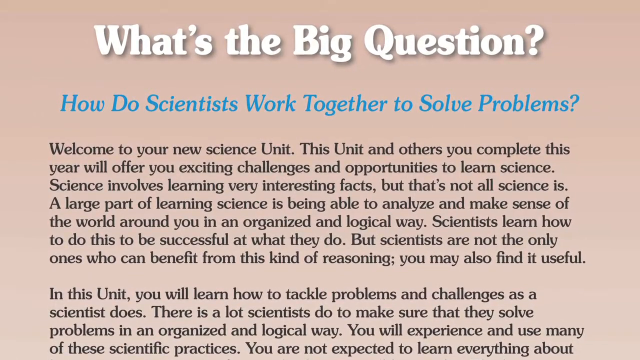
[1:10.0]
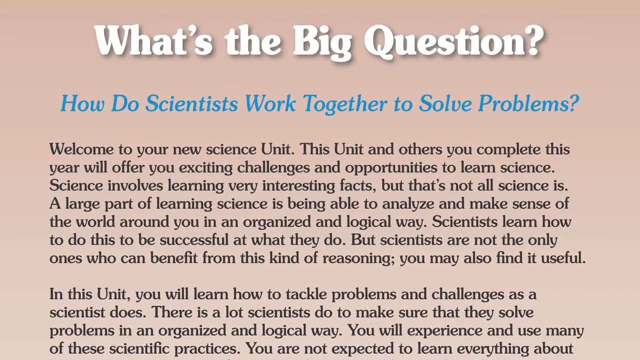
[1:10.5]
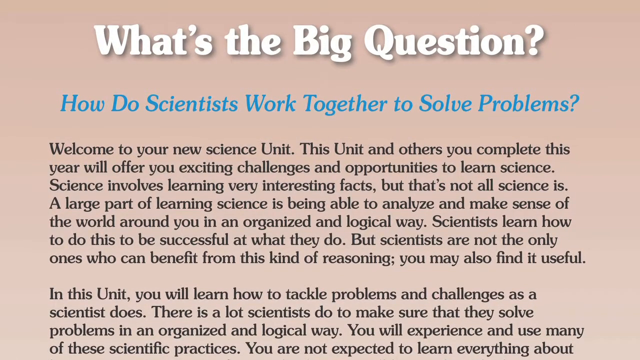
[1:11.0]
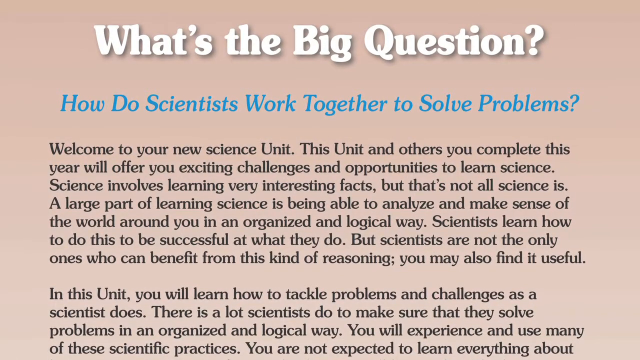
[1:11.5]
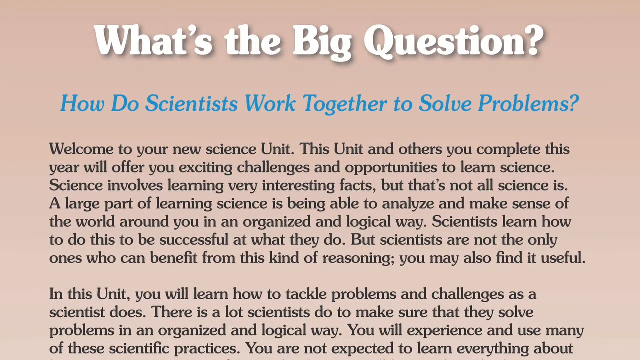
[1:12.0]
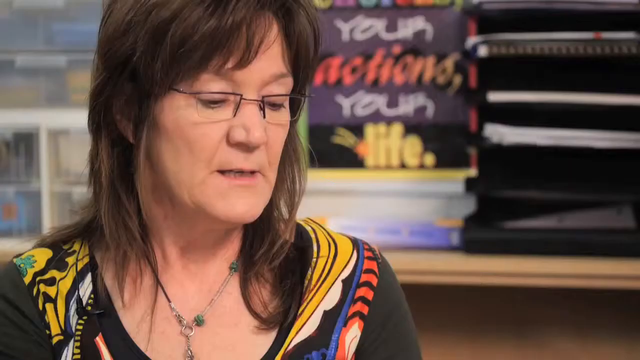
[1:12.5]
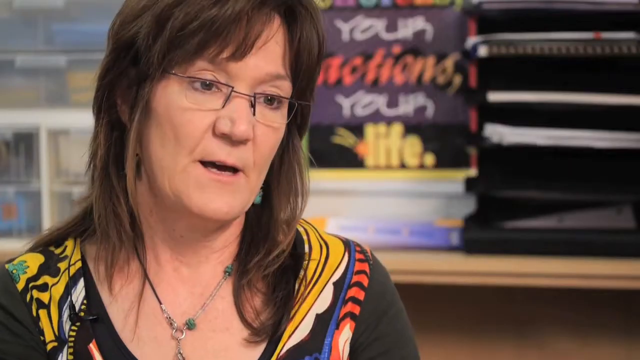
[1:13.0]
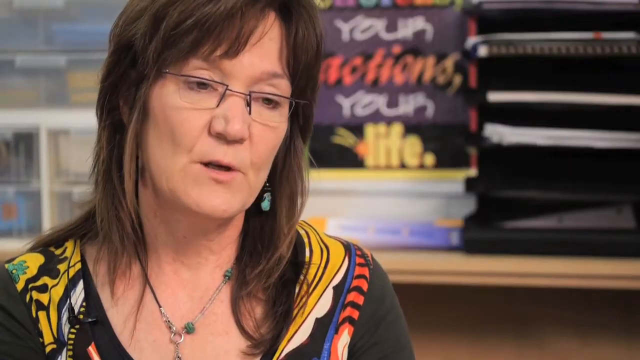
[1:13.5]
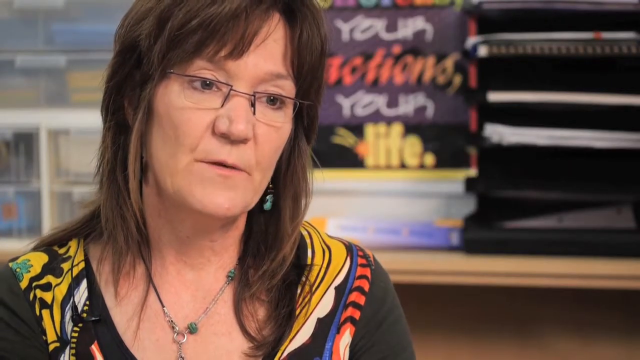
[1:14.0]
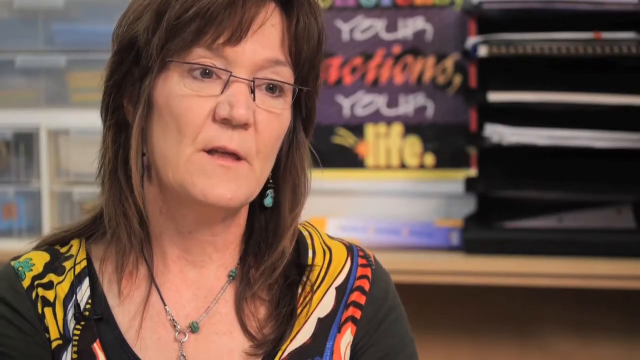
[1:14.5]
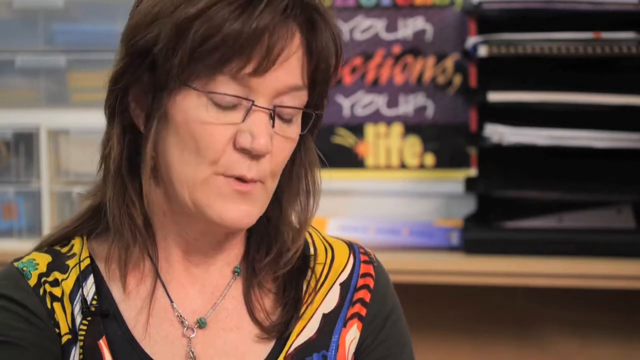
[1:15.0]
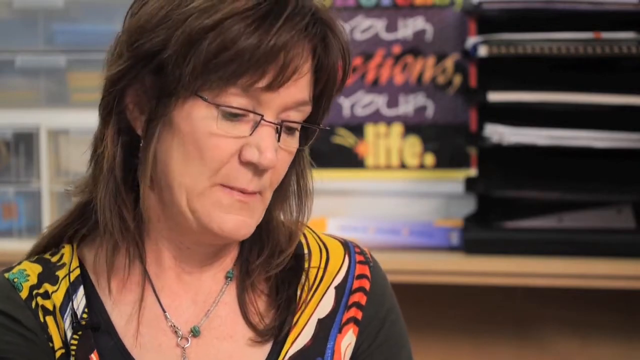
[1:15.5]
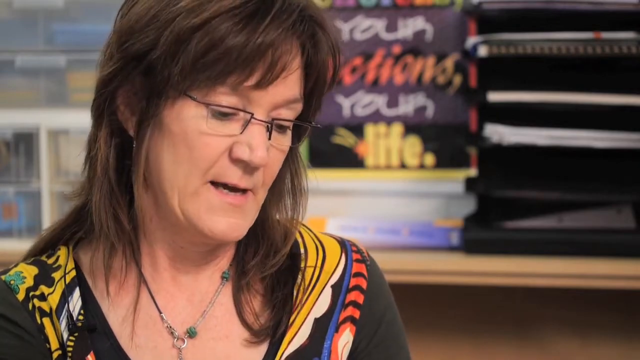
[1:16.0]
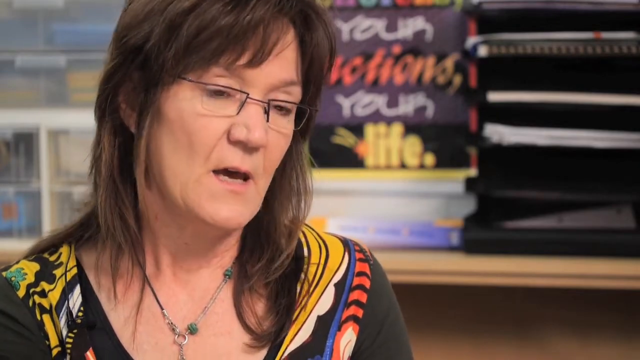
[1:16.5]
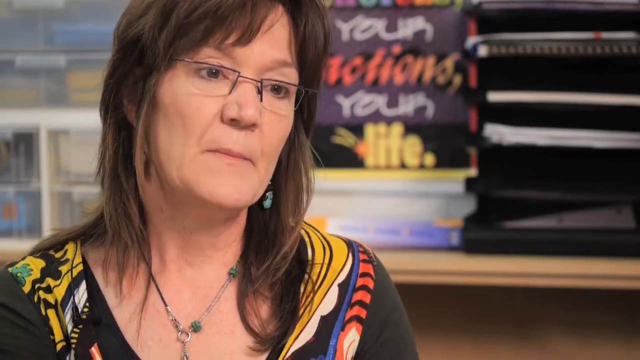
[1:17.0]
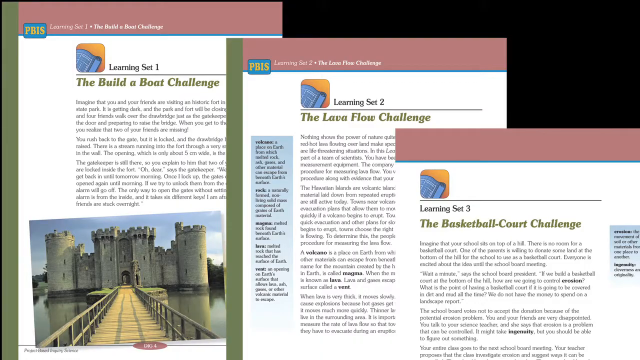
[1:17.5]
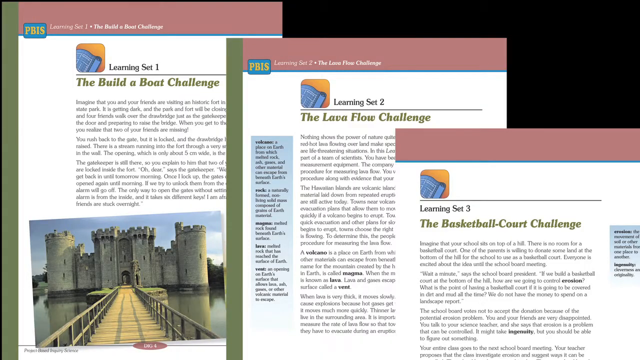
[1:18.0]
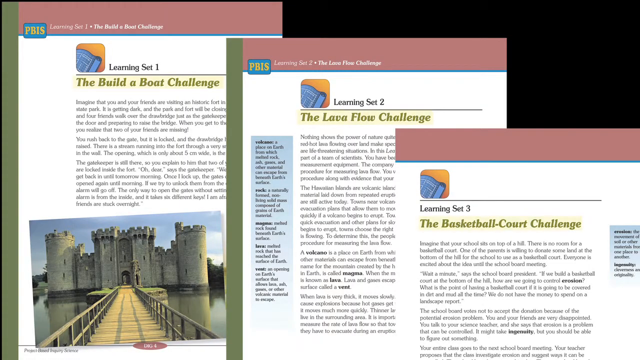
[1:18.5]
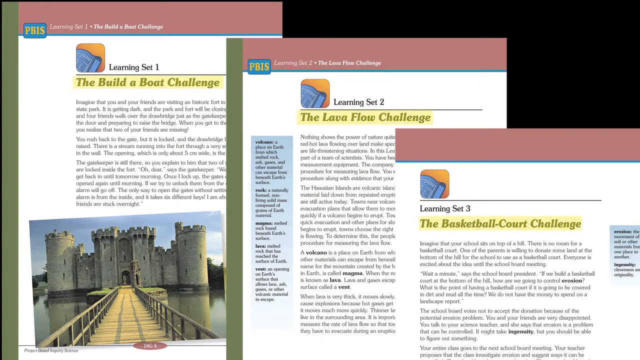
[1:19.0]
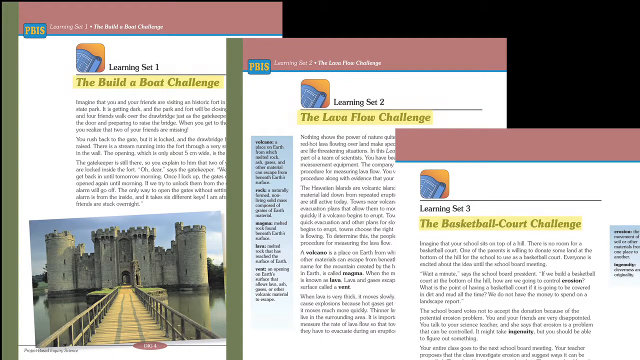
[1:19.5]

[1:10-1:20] A picture shows how scientists work together to achieve a common goal, with numbered challenges: step one, "build a boat challenge"; number two, "lava flow challenge"; and number three, "basketball court challenge". The book is purple, with the heading written in white and blue, and a subheading about scientists working together to solve a problem.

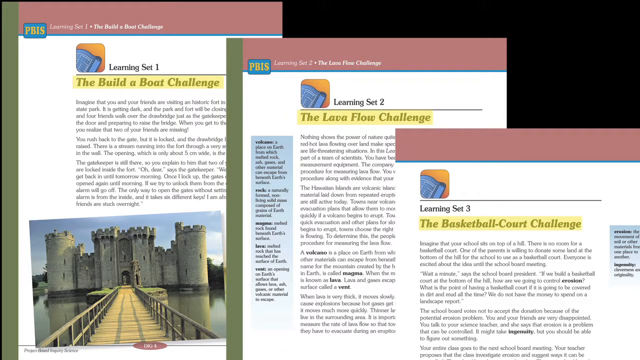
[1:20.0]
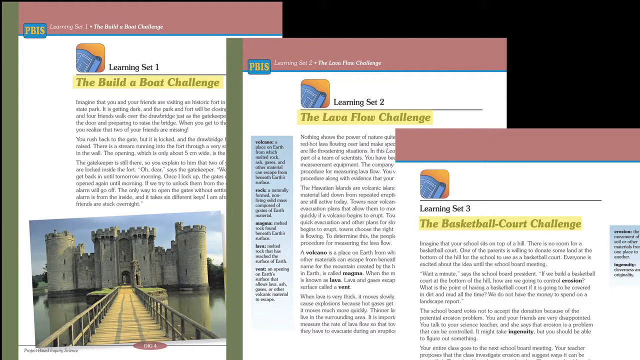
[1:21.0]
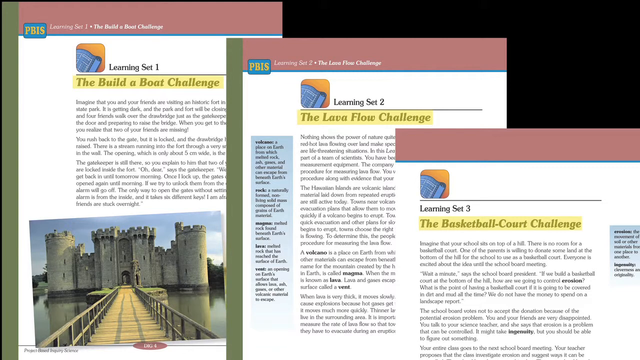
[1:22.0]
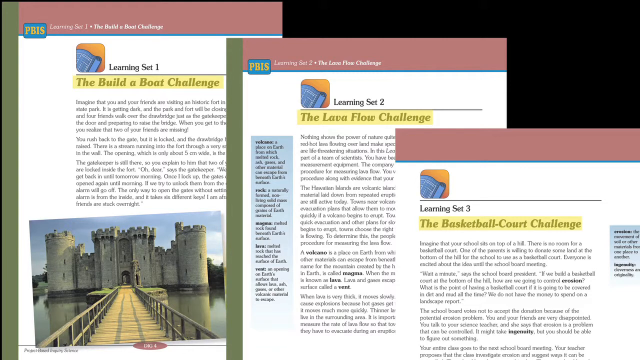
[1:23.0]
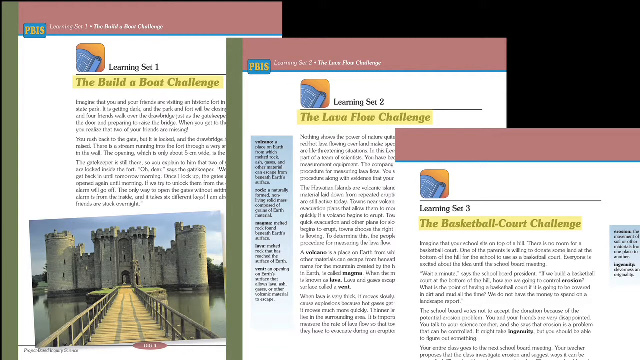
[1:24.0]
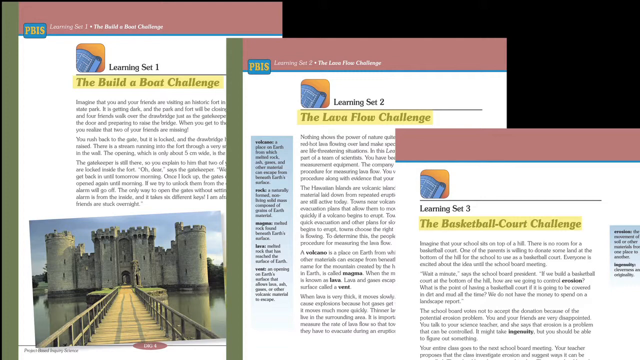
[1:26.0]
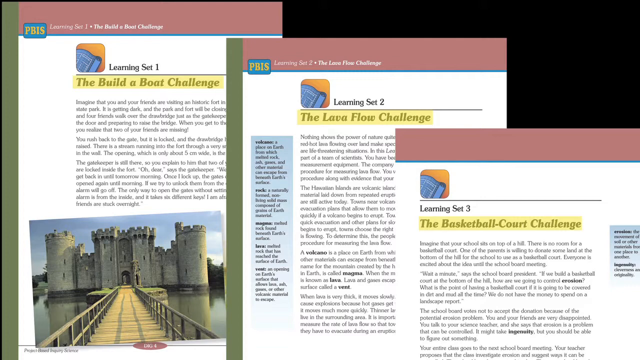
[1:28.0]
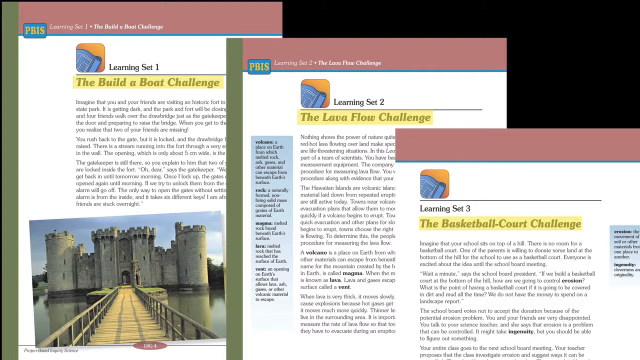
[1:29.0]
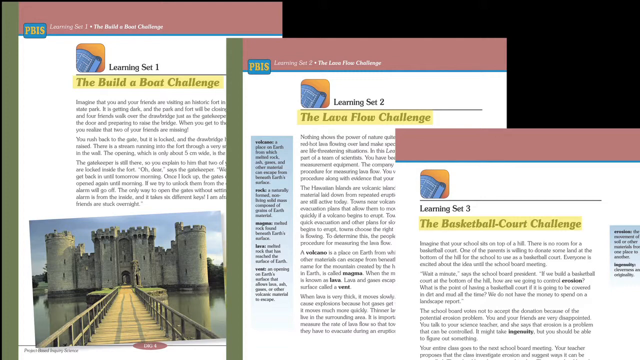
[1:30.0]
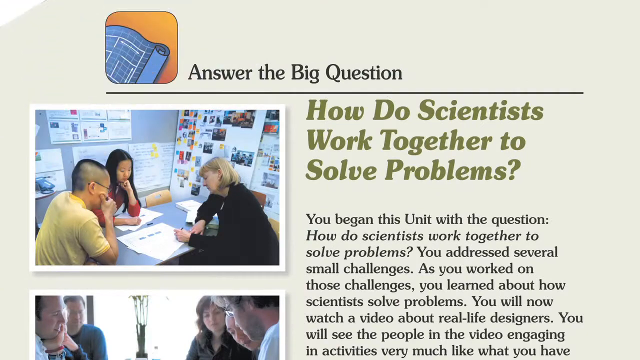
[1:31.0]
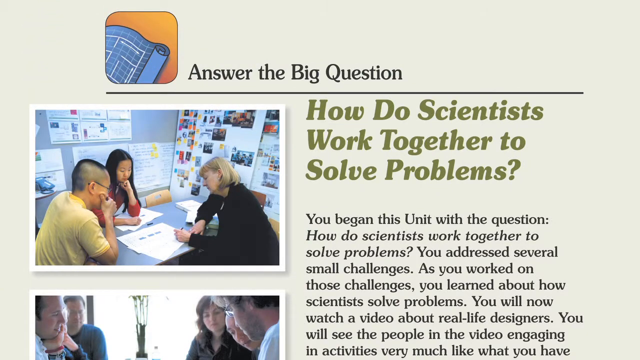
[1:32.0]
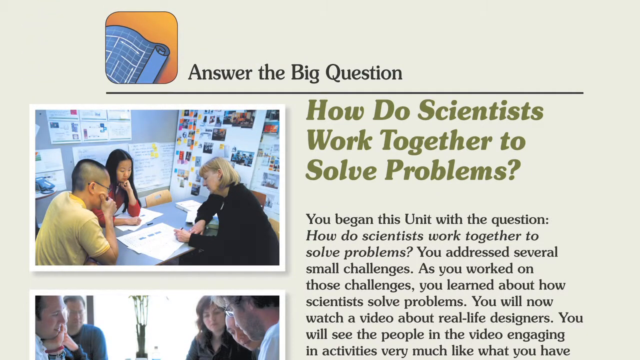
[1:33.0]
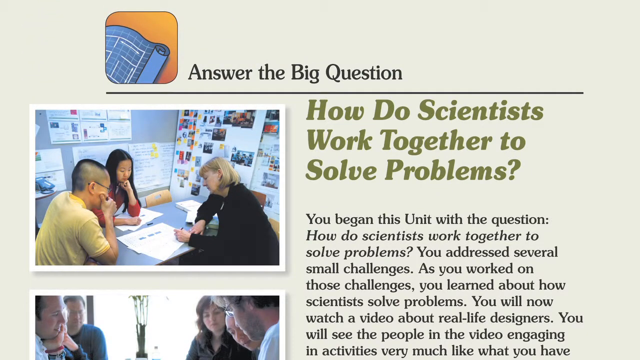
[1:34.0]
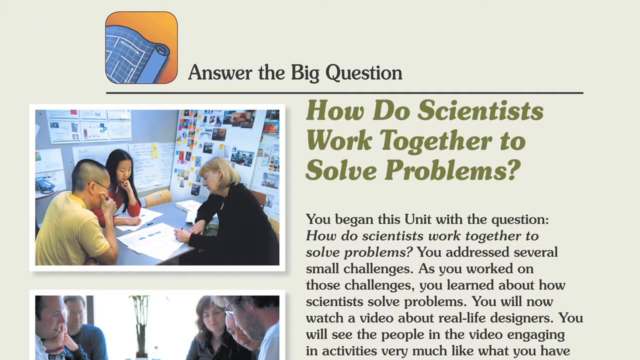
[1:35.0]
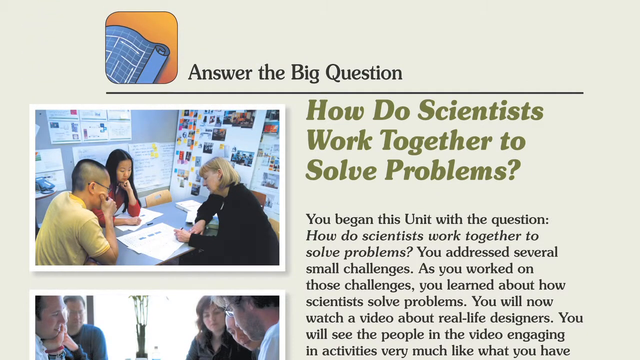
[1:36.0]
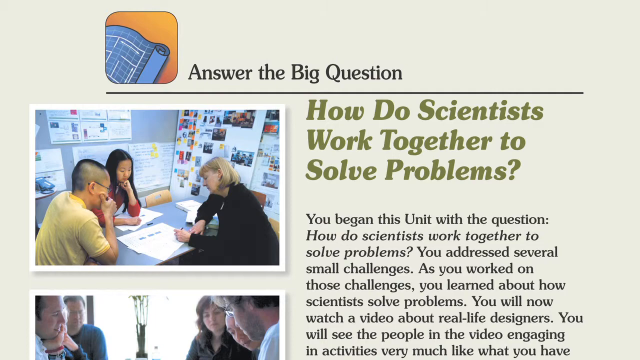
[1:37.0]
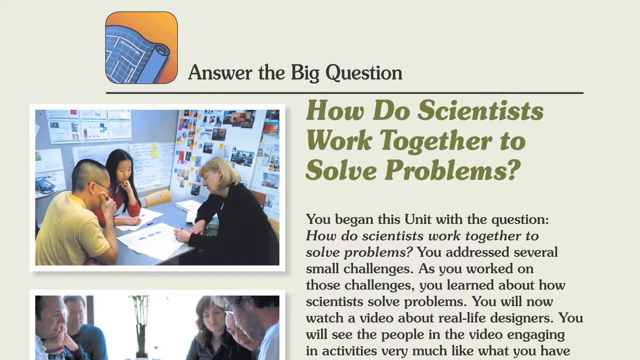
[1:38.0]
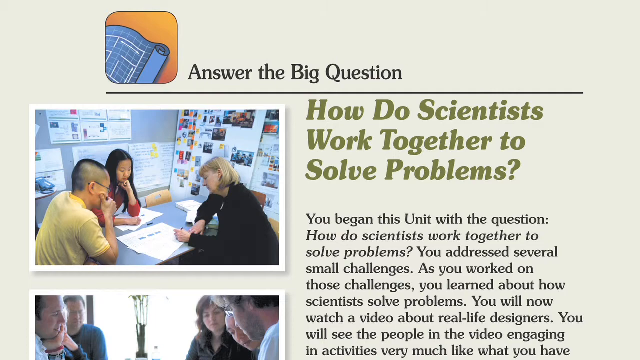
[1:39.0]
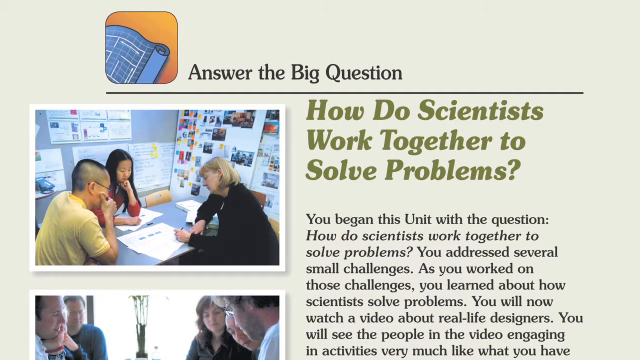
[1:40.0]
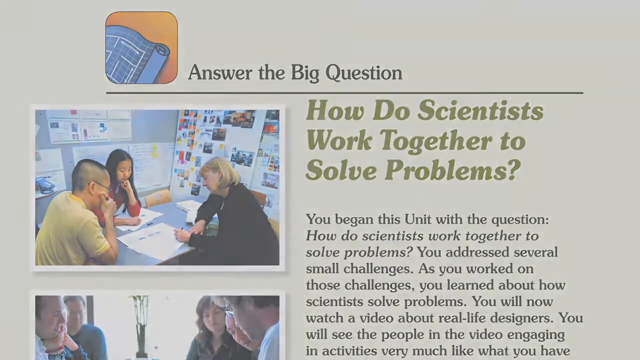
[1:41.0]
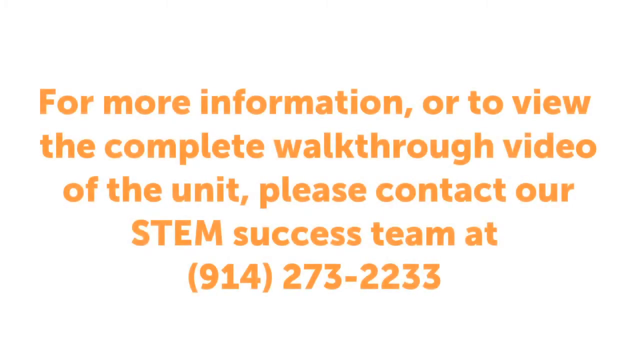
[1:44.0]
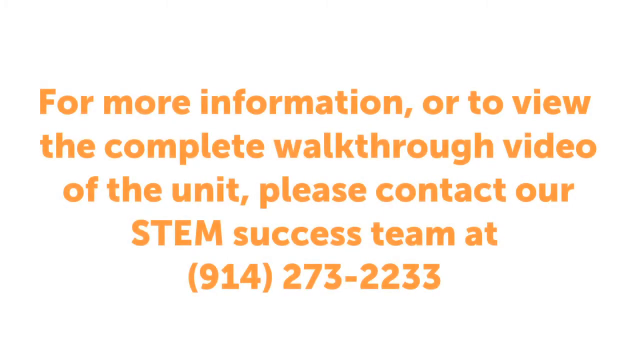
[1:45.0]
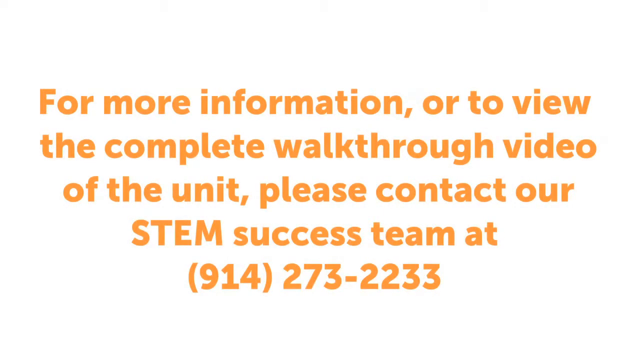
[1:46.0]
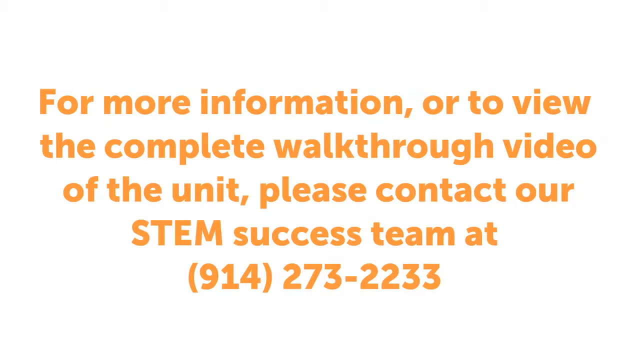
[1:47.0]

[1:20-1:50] The book presents the question of how scientists work together to solve a problem and the challenges used to address it. Text reads "For more information" and "please contact our STEM success team", with the number 914 273 2233. Down by the build a boat challenge there is a picture with big buildings.